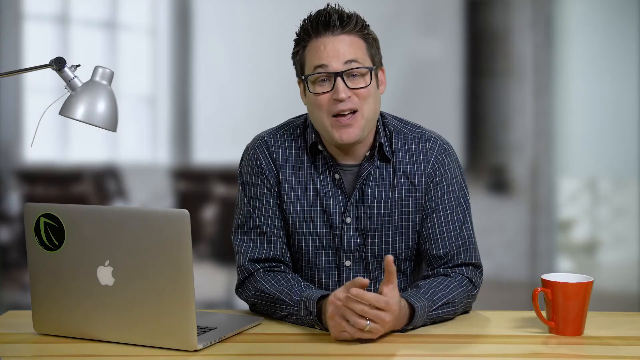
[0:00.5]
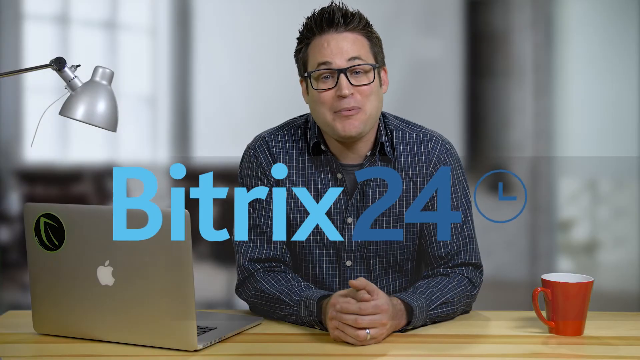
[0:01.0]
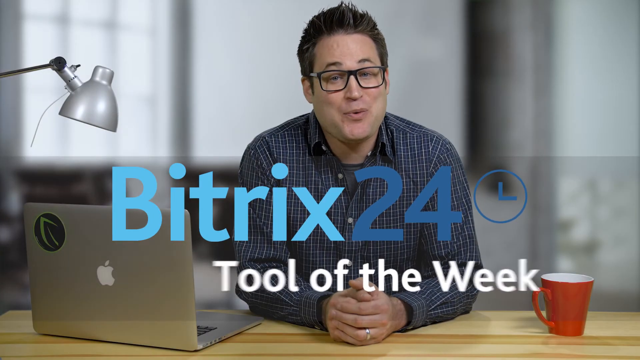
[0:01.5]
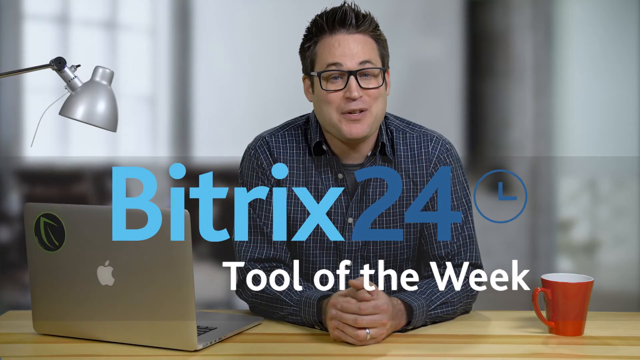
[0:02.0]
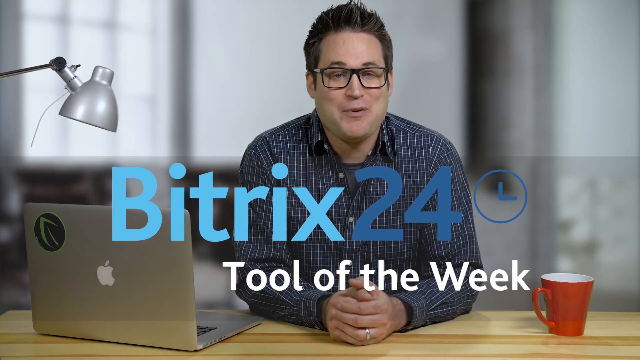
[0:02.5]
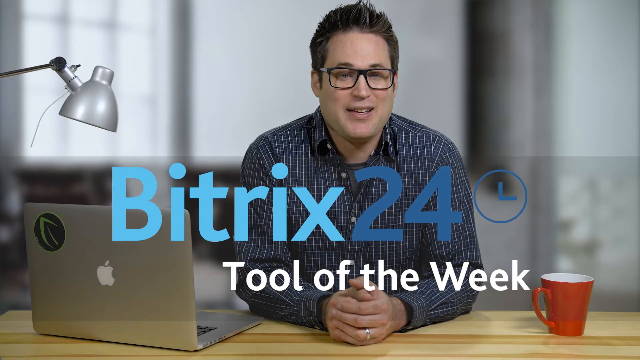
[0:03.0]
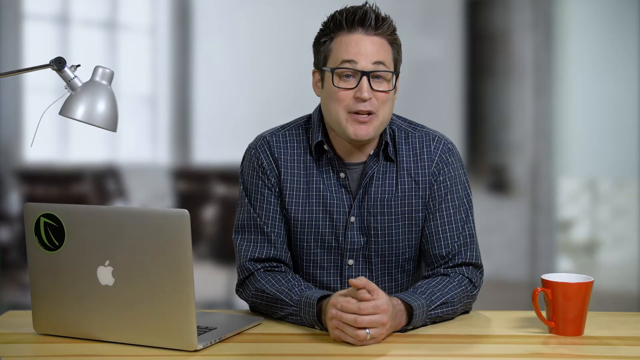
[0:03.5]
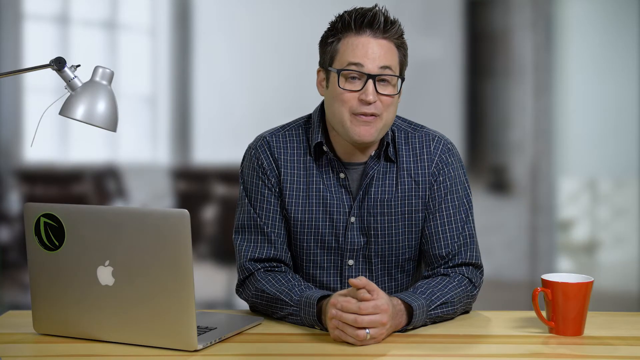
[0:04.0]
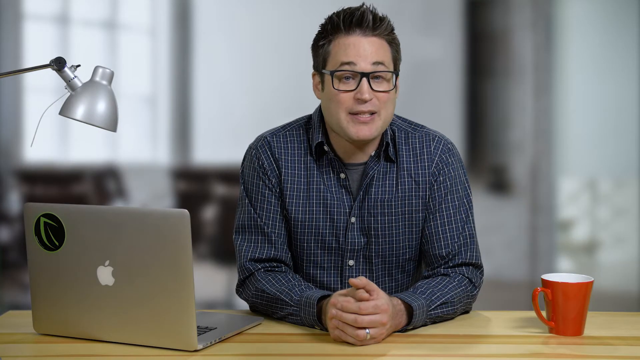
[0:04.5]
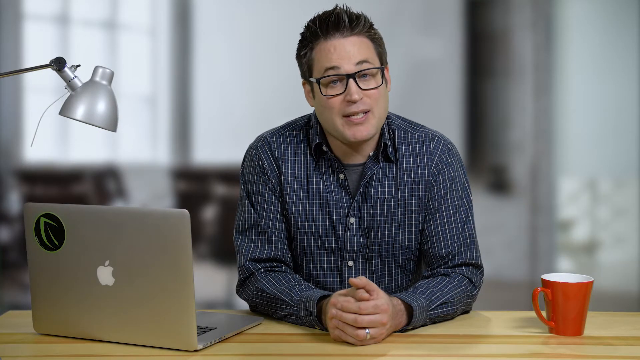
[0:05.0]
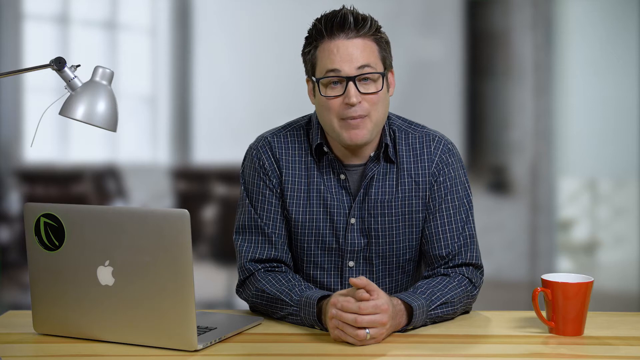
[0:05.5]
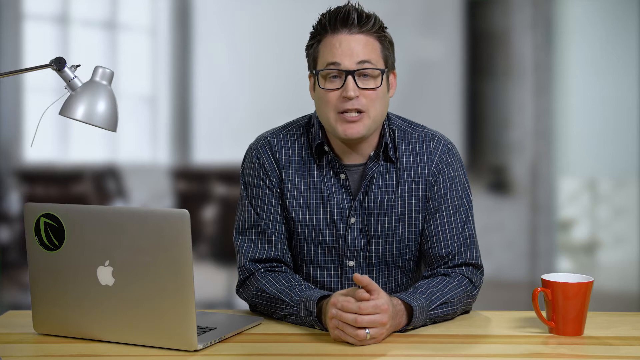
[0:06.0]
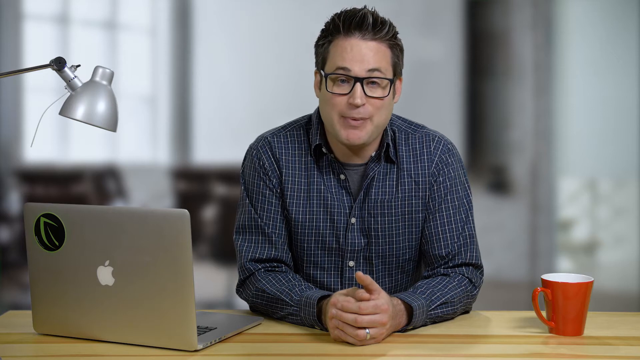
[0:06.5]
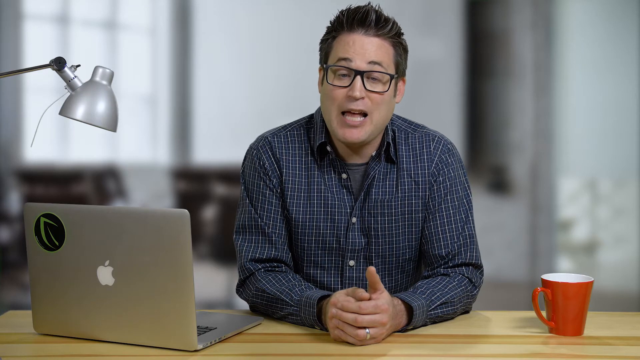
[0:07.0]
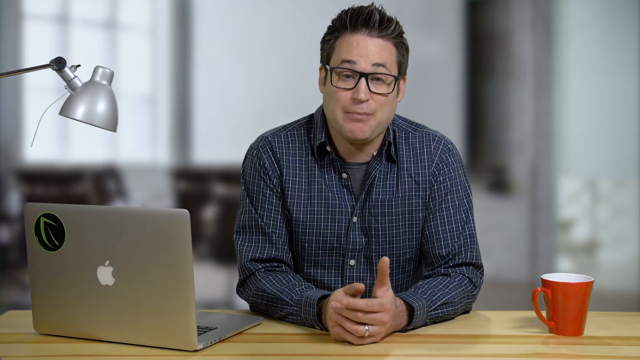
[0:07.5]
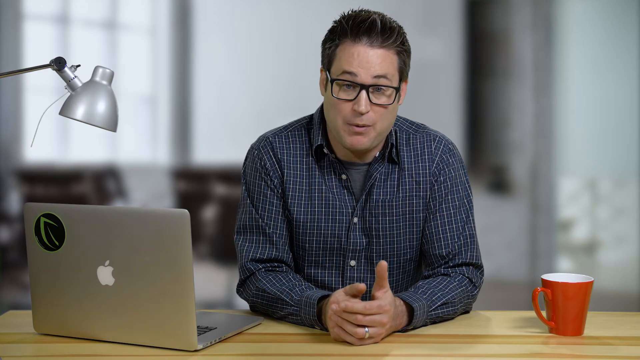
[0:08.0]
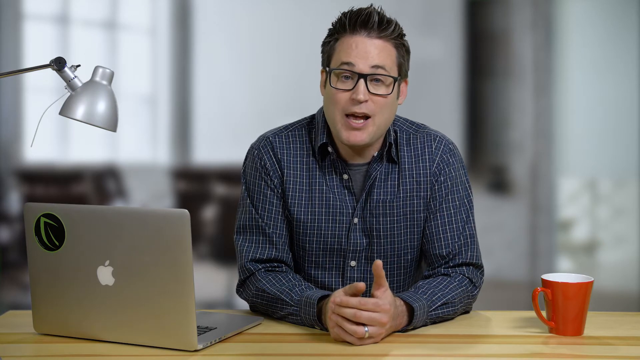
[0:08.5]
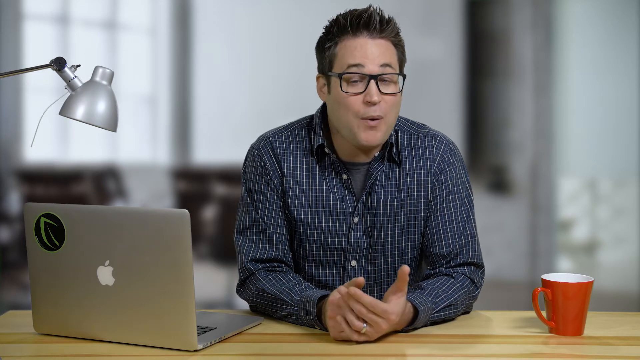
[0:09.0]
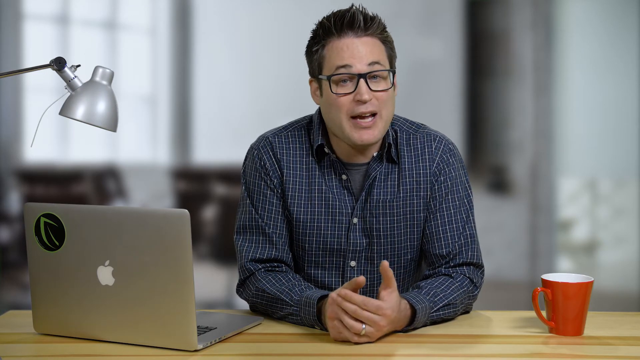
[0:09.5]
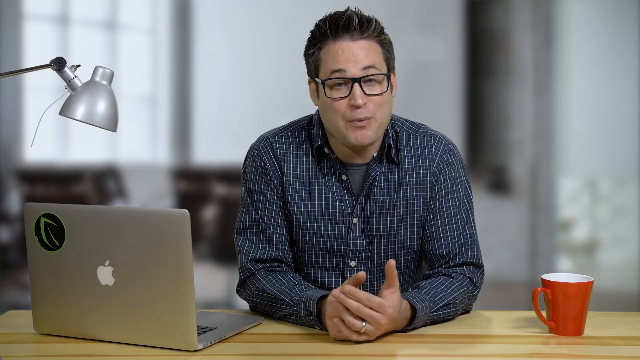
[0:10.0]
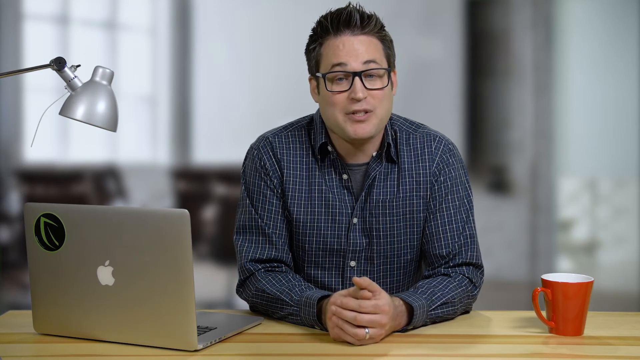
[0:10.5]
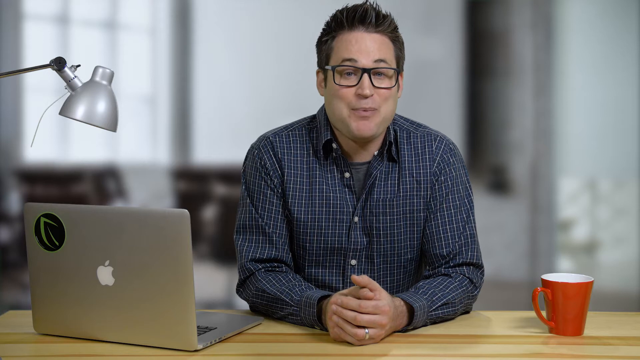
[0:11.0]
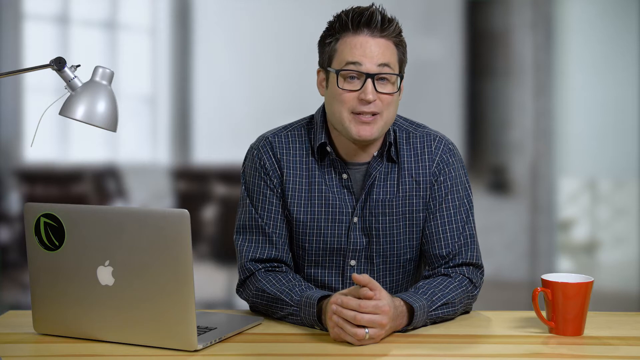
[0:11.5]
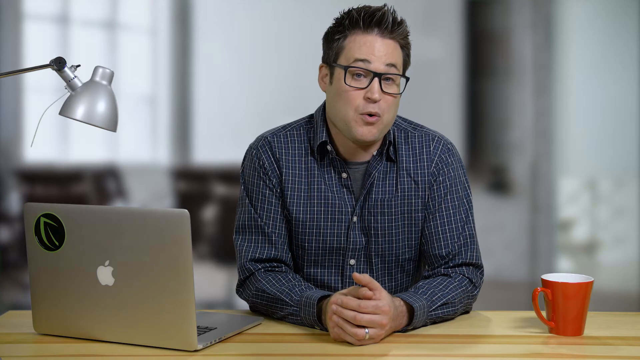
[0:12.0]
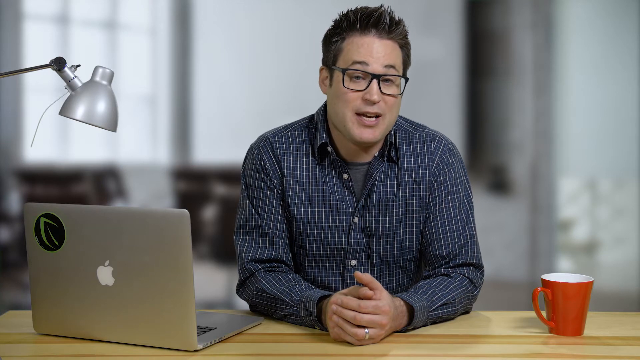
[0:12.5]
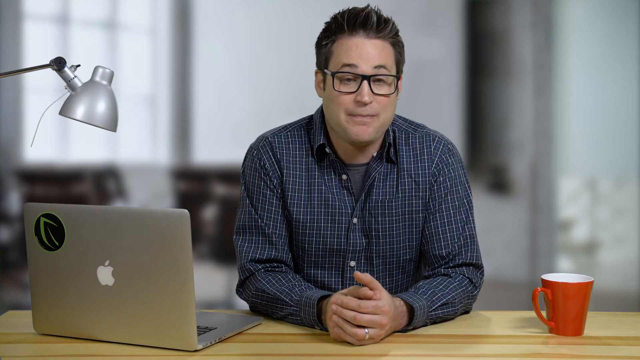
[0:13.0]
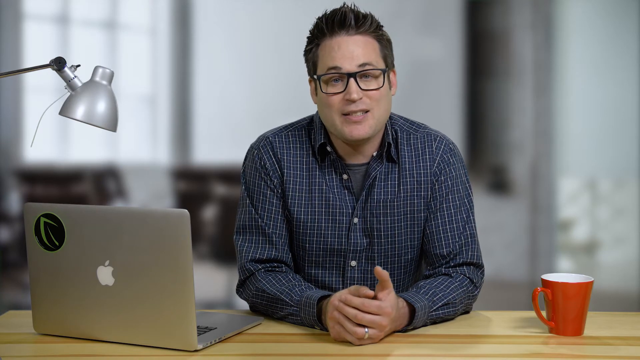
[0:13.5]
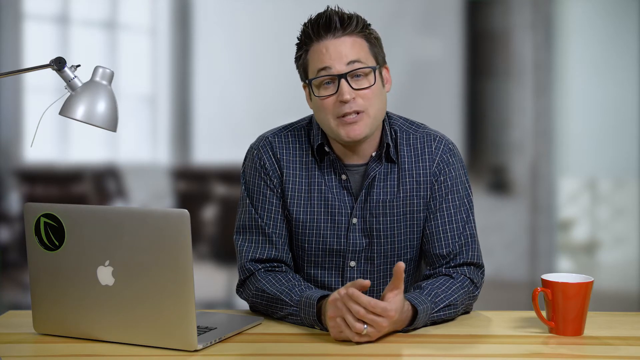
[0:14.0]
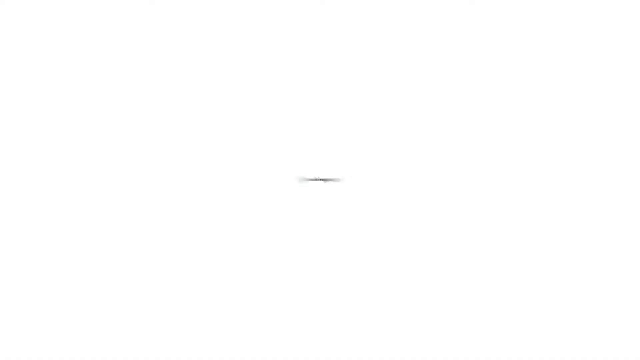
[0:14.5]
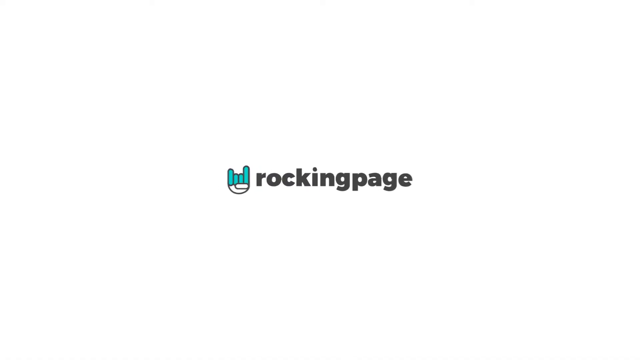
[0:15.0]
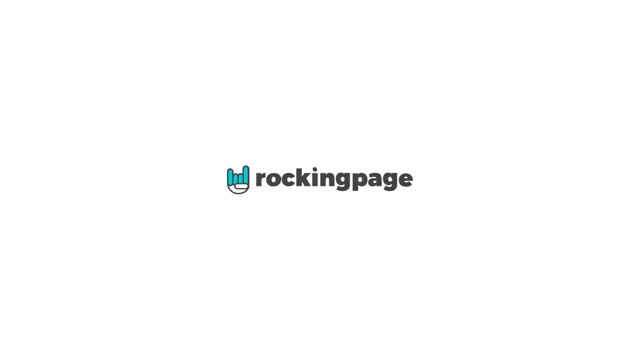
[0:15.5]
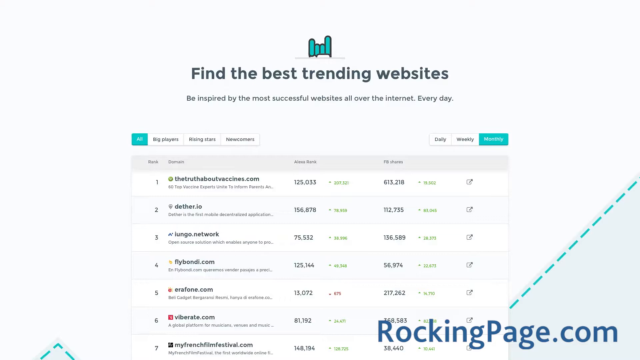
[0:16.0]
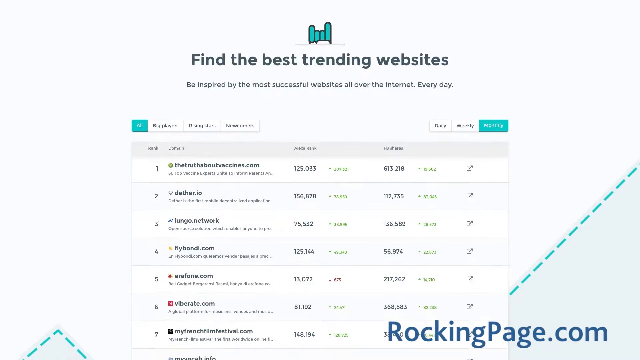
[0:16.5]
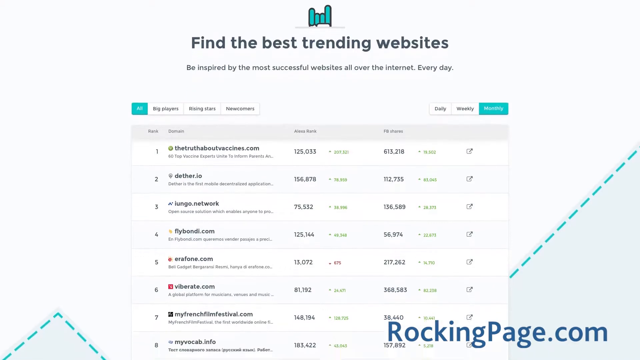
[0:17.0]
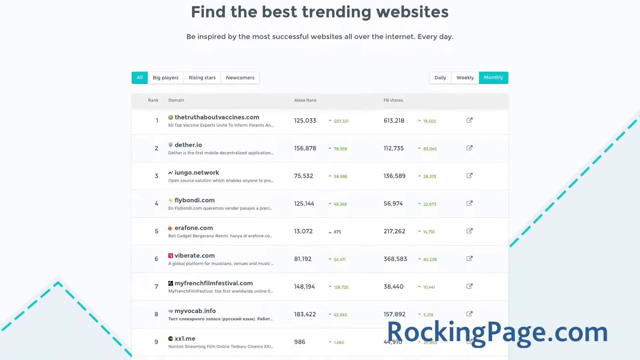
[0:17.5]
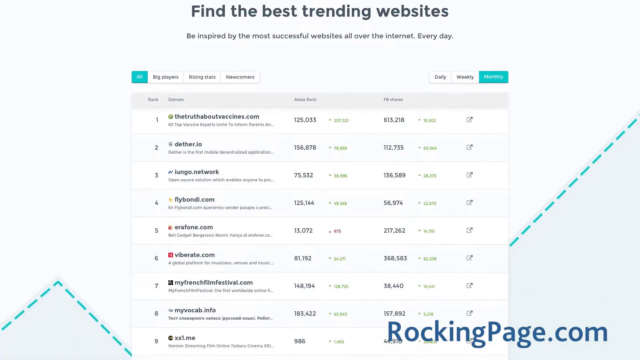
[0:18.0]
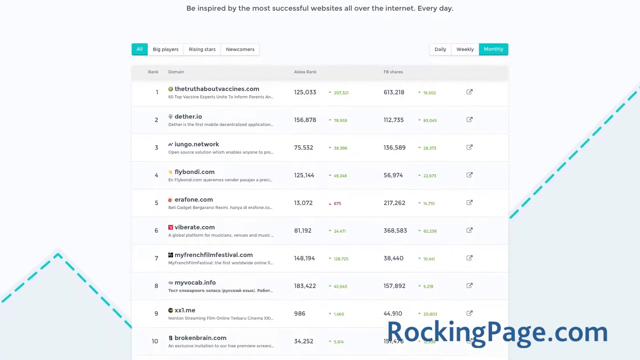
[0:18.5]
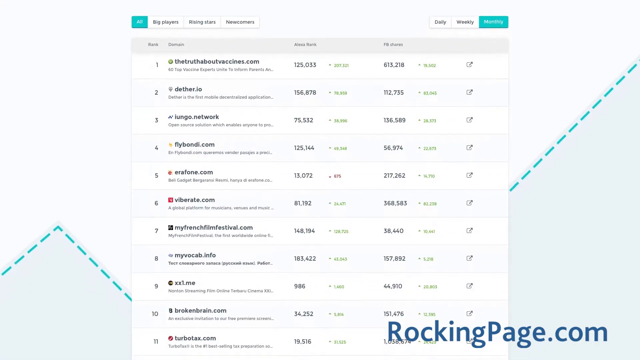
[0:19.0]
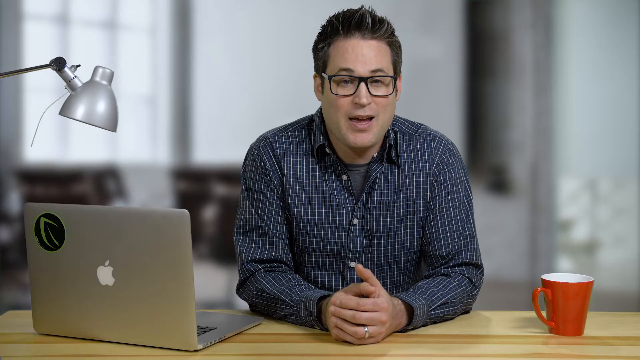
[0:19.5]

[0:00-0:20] Blue text reading "Bittrex 24 tool of the week" opens the video. The setting looks like a home office, where a man wearing glasses and a nice shirt talks next to a laptop and a mug, seemingly about some sort of technology tool of the week. As he talks casually to the camera, a new page appears reading "rocking page" with a brand logo. The page is briefly shown, with text describing it as a website for finding the best trending websites, along with a link to the site. The site's content shows multiple websites ranked from number one, with their numbers of active users, files and visits. After this brief look at the site, the video cuts back to the man.